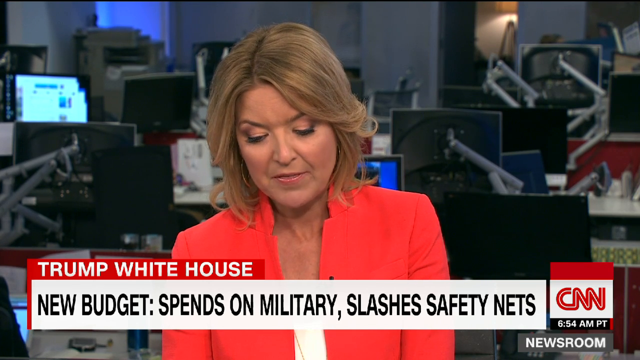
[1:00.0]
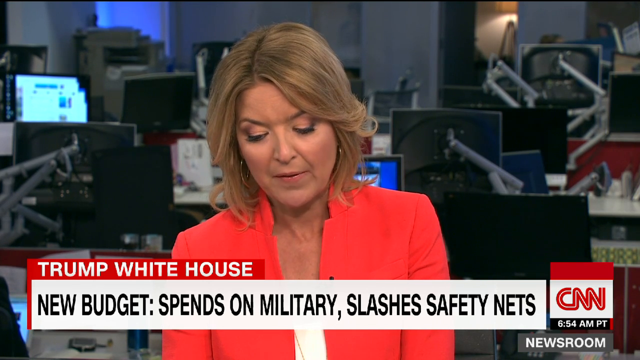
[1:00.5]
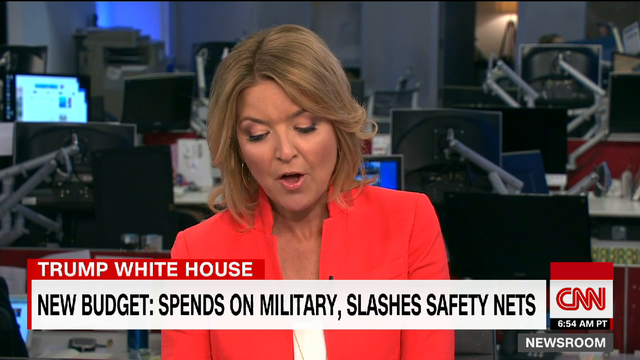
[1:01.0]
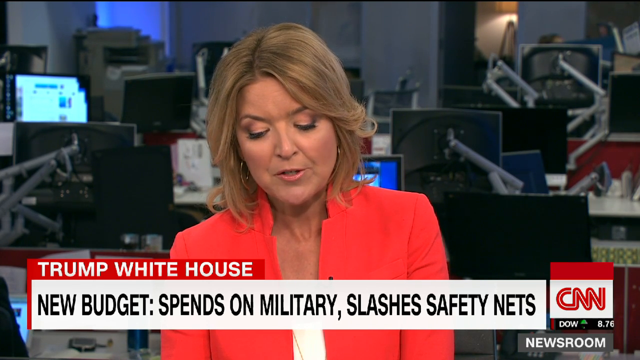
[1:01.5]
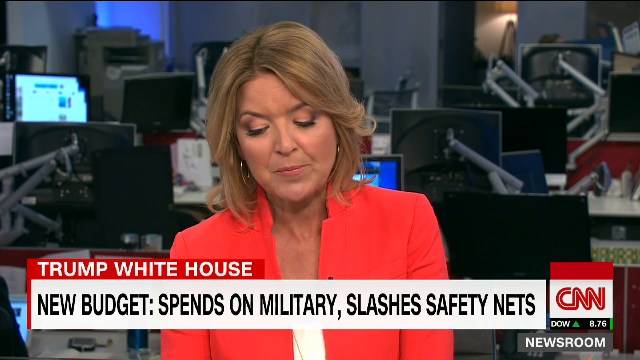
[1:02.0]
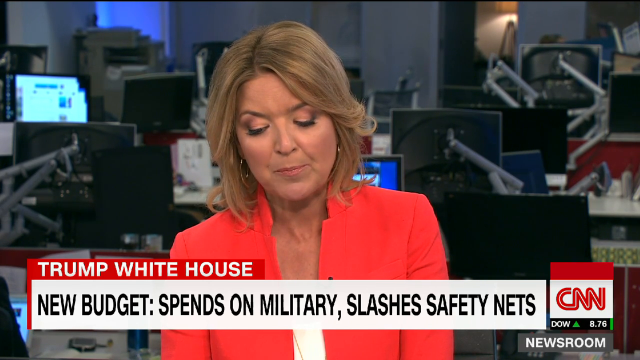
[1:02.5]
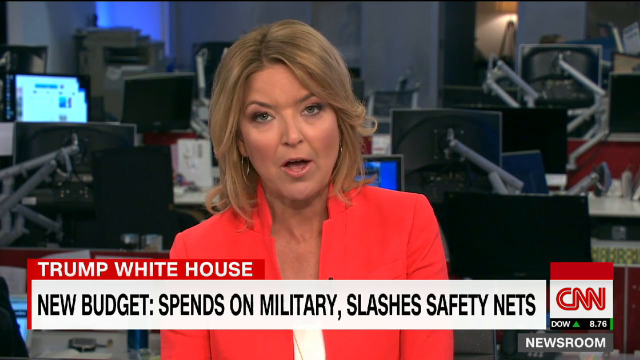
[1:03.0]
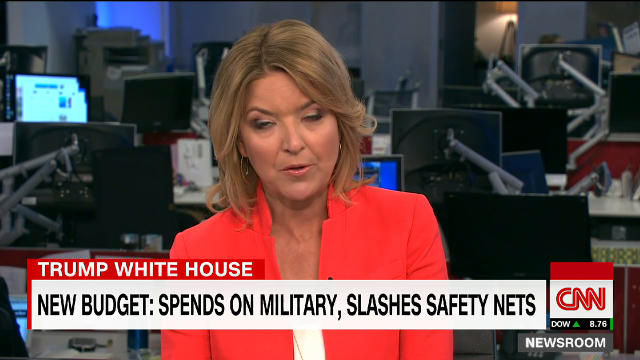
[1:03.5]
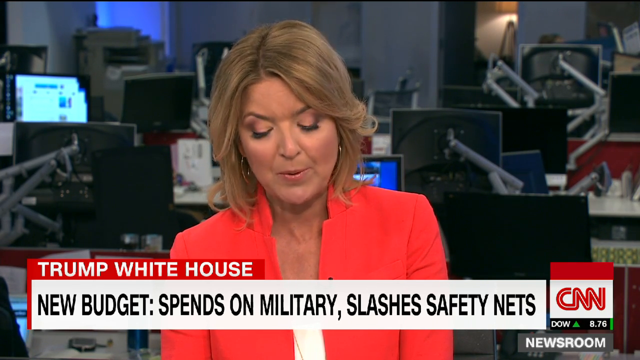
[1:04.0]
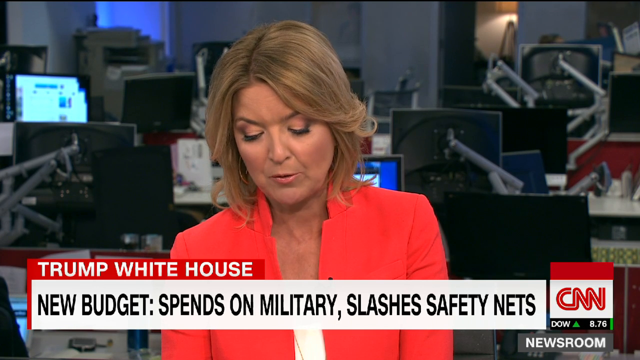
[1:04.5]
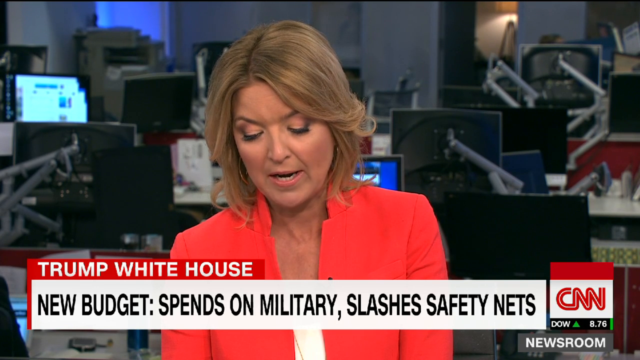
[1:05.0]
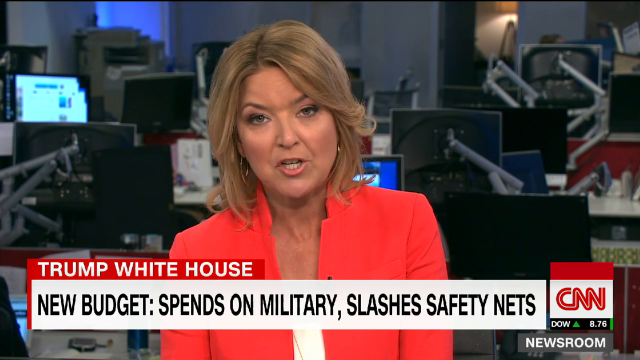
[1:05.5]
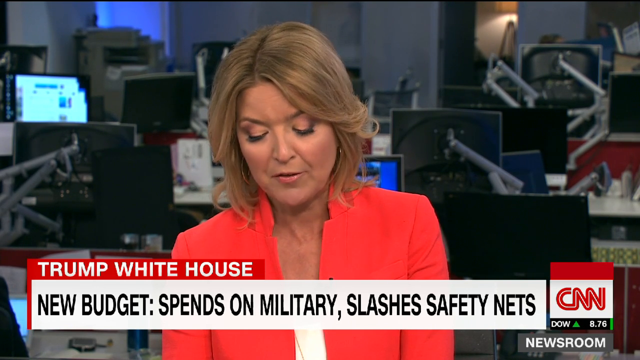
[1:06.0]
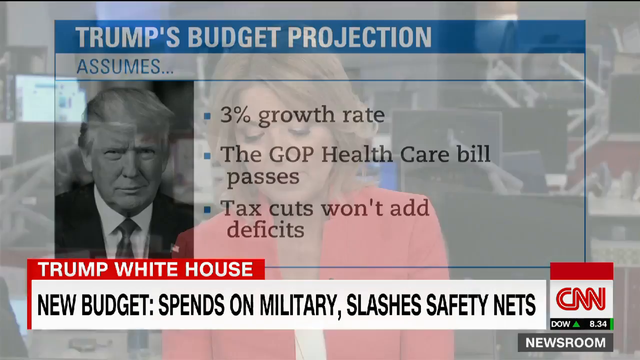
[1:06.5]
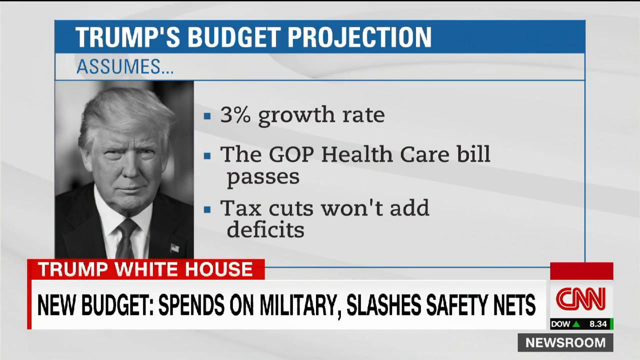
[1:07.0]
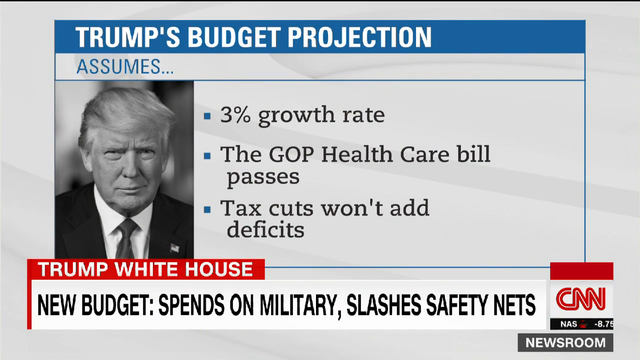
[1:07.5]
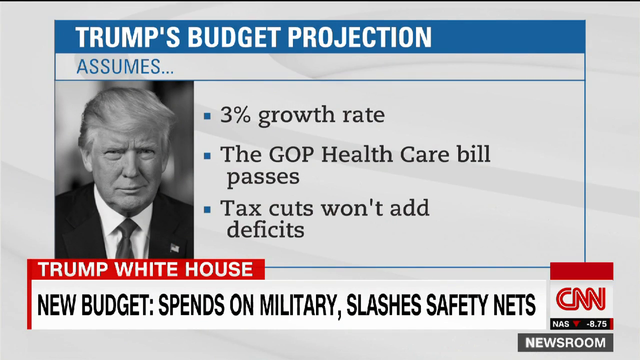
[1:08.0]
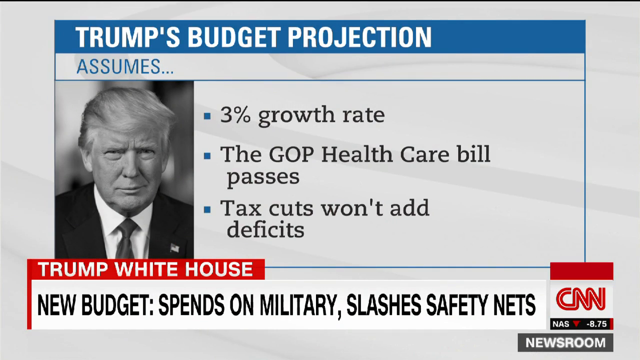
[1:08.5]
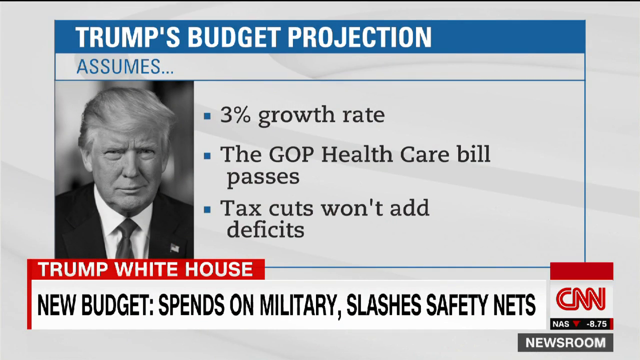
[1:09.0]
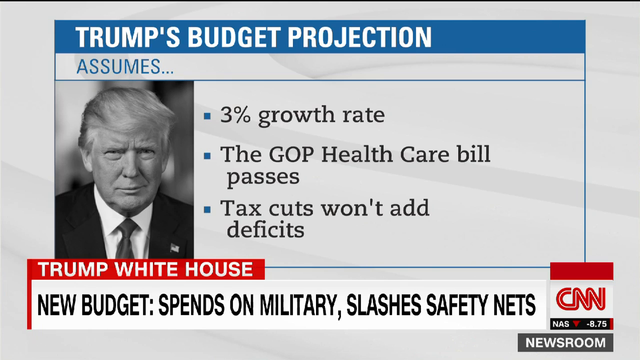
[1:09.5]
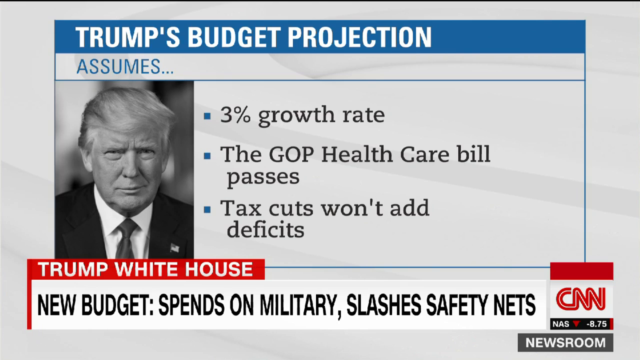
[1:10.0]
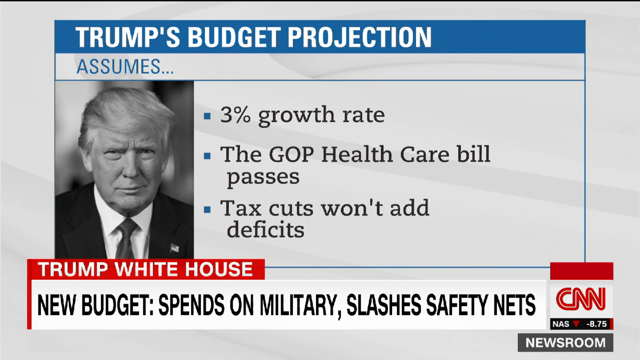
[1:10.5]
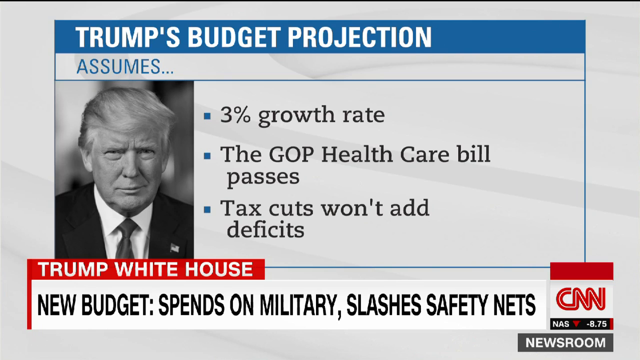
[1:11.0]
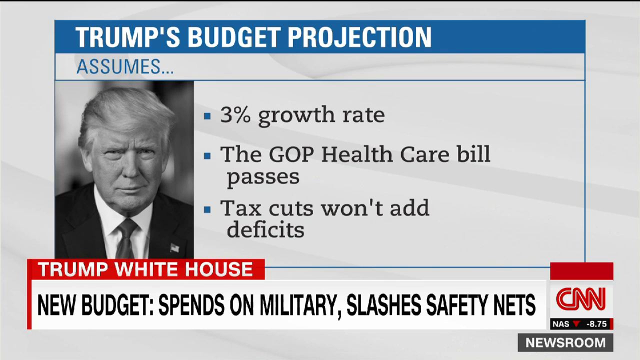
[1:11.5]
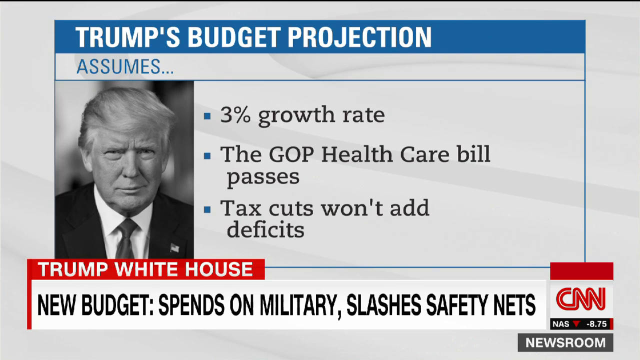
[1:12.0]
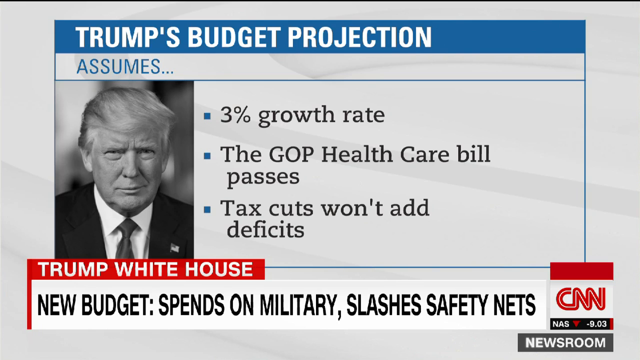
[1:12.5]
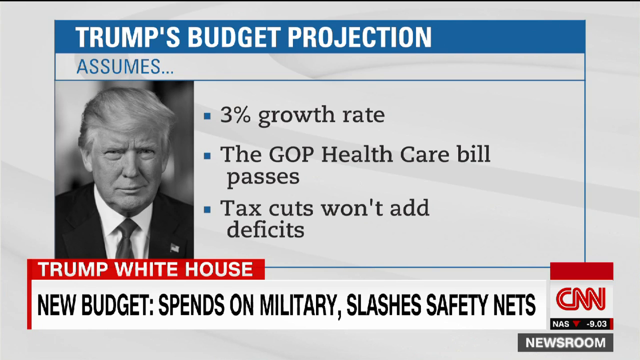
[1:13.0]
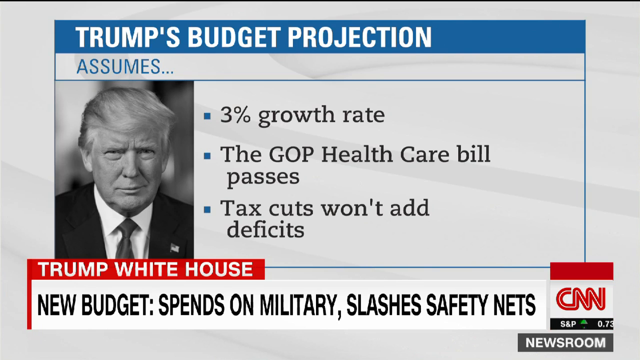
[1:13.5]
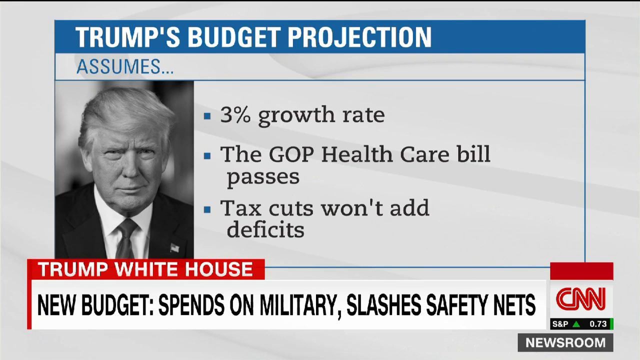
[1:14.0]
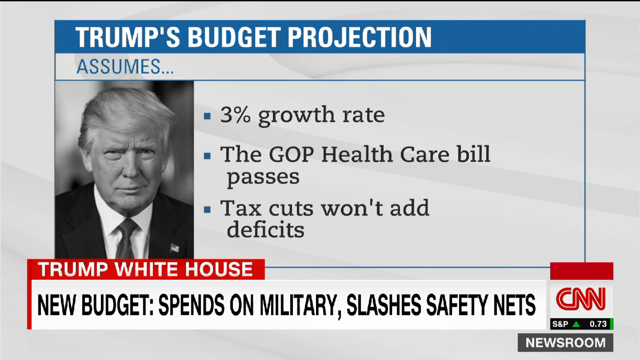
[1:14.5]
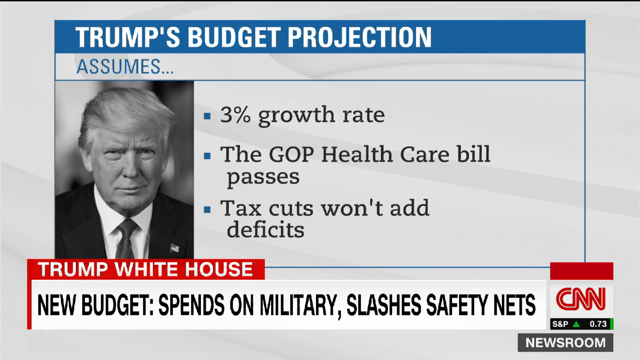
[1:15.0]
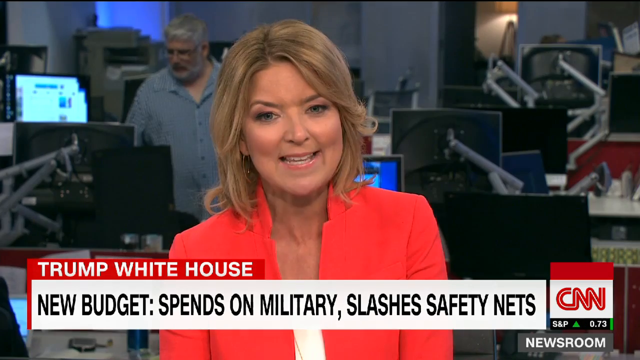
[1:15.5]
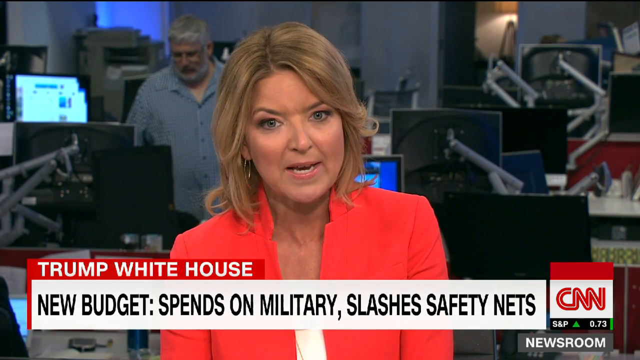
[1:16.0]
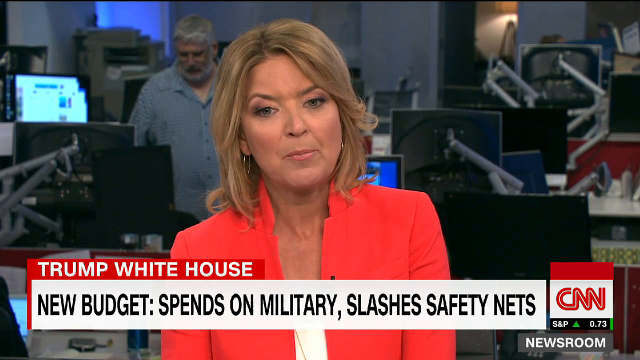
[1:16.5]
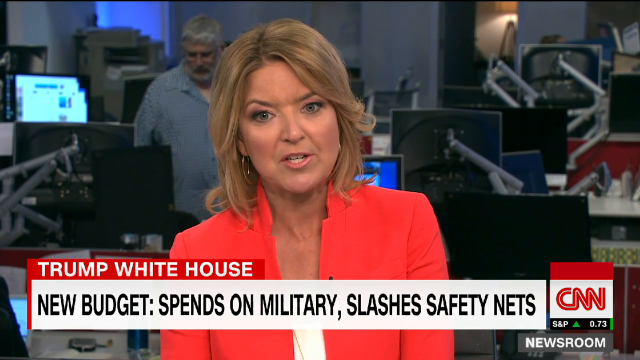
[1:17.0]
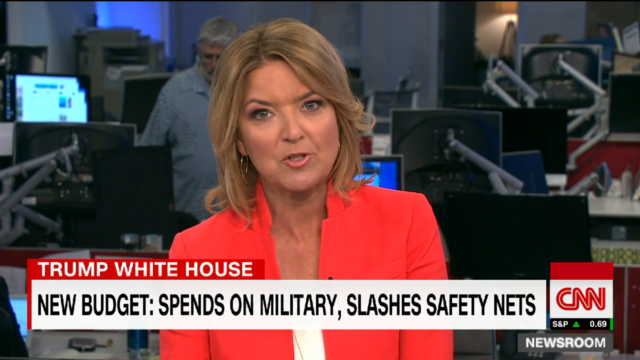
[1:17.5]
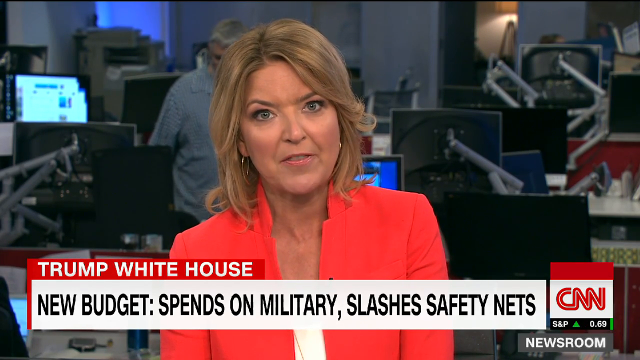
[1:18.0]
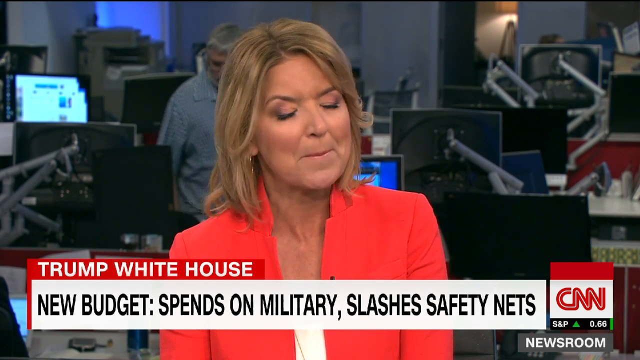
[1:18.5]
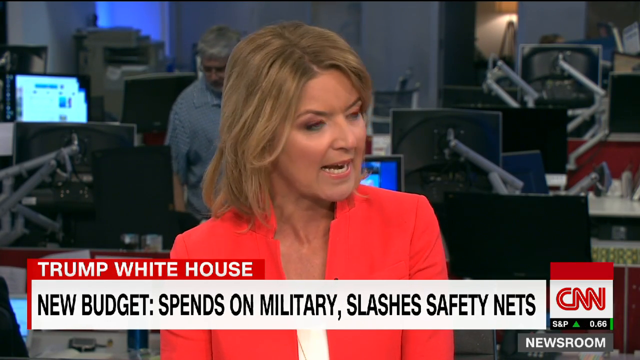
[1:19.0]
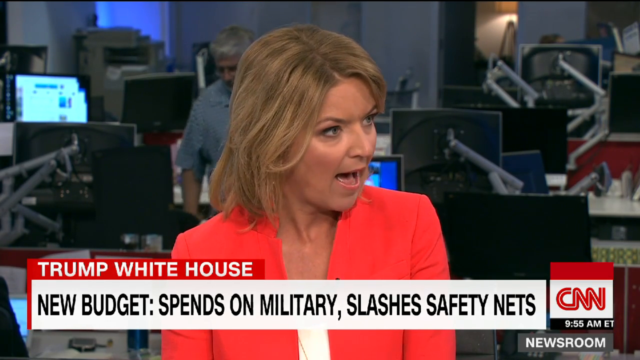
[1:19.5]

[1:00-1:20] The screen shows "Trump's budget projection assumes," followed by items including a "3% growth rate" and the healthcare bill passing, with a mention of tax cuts.